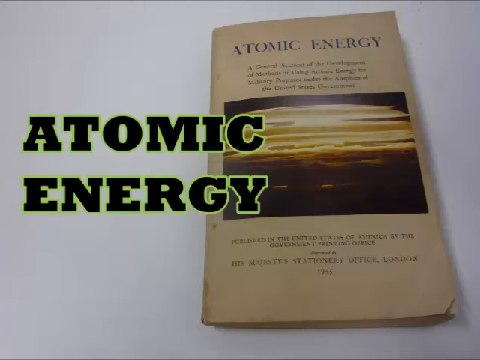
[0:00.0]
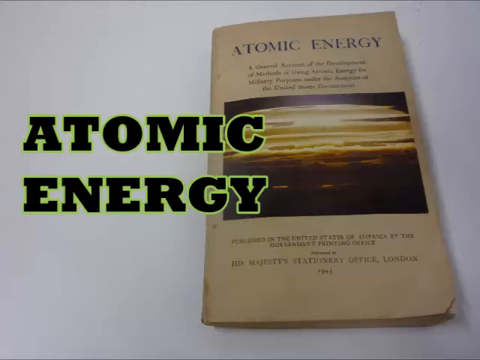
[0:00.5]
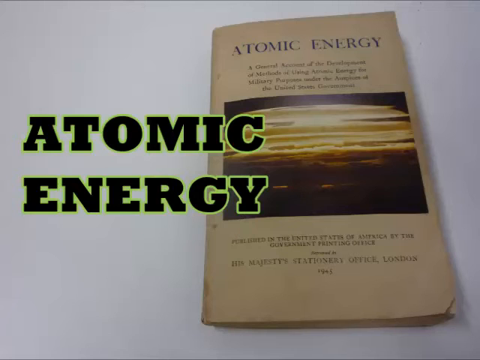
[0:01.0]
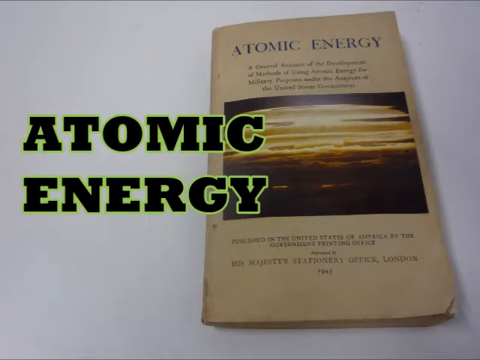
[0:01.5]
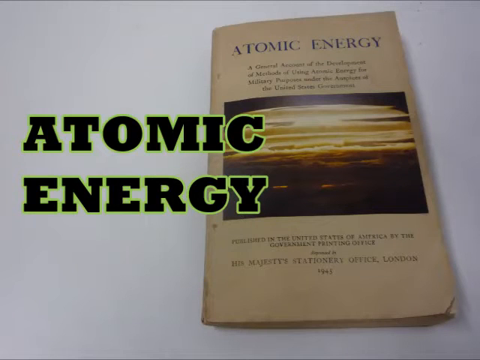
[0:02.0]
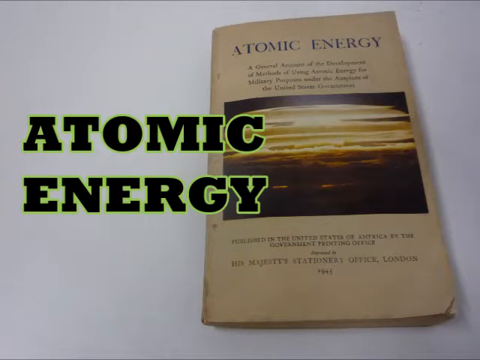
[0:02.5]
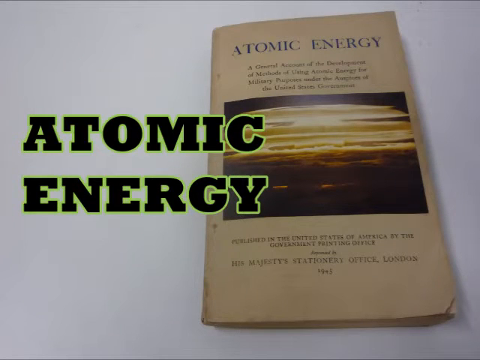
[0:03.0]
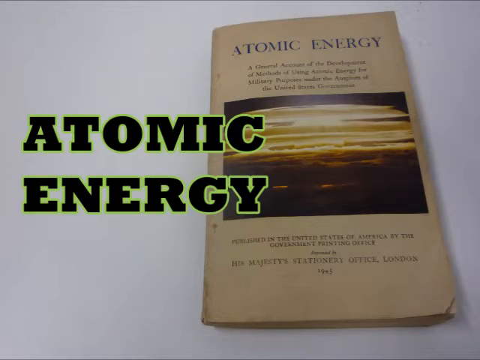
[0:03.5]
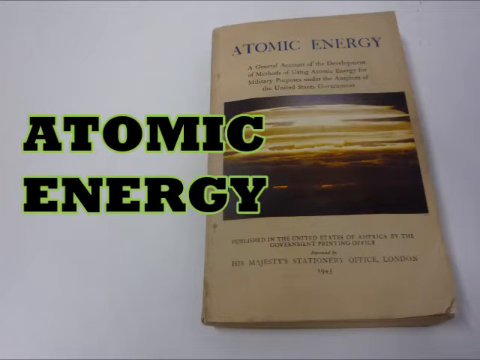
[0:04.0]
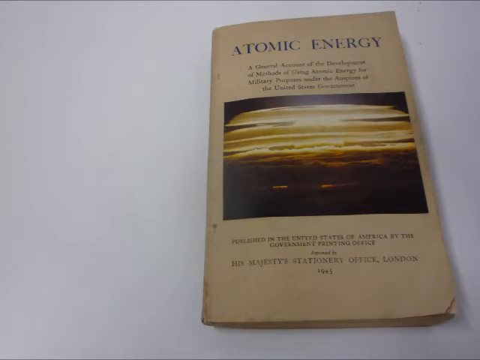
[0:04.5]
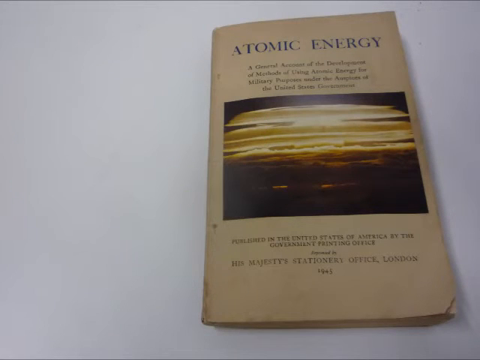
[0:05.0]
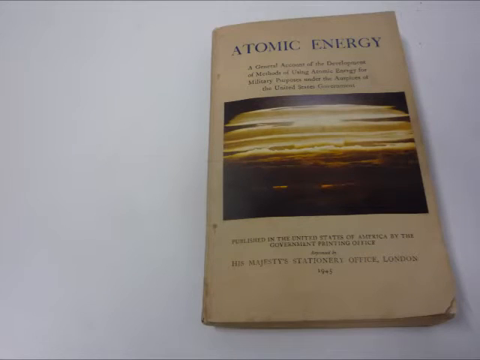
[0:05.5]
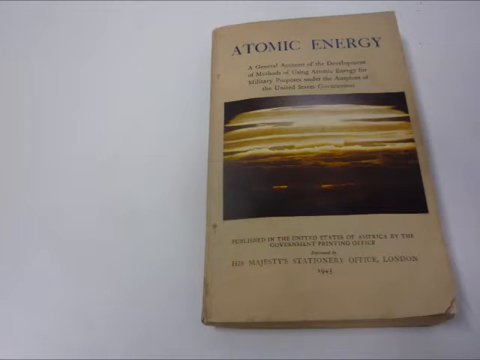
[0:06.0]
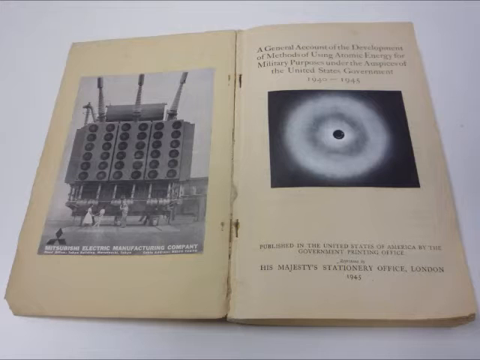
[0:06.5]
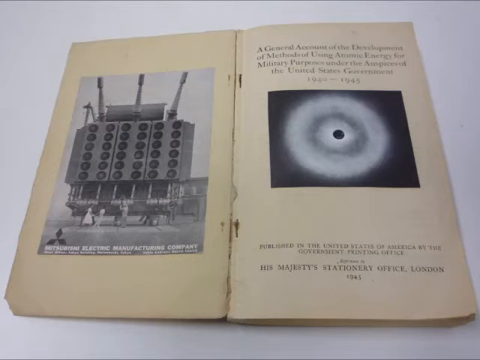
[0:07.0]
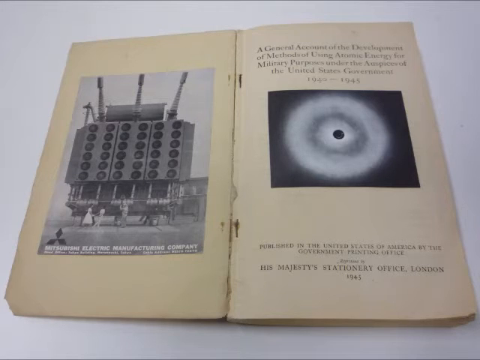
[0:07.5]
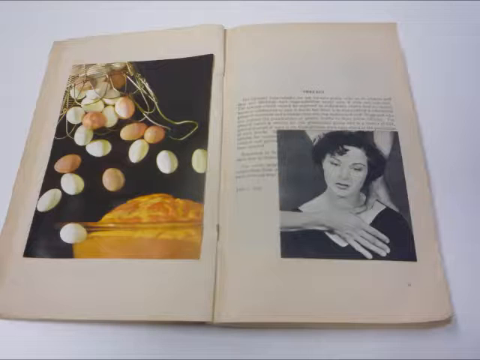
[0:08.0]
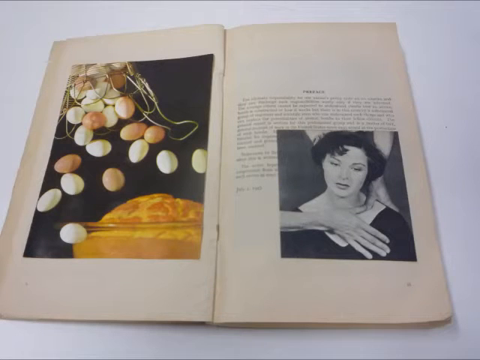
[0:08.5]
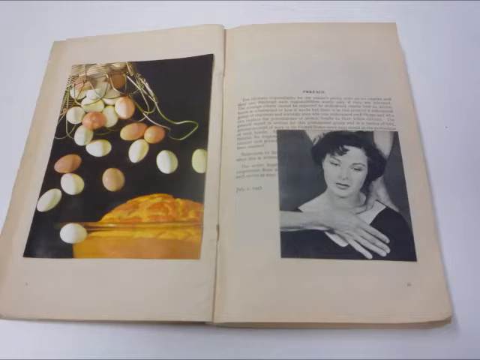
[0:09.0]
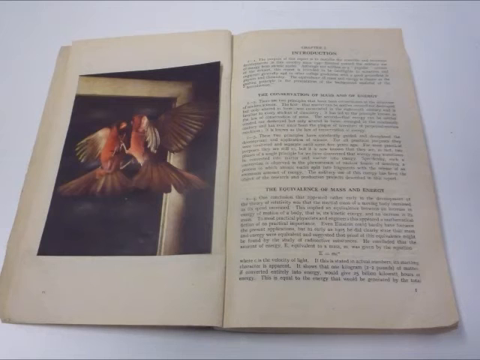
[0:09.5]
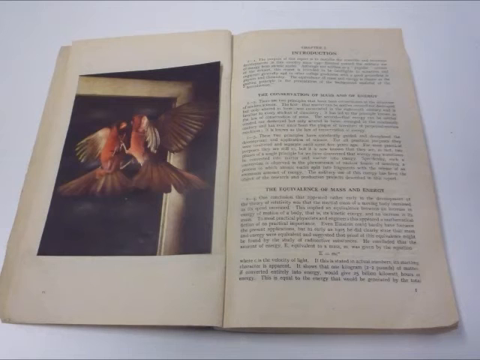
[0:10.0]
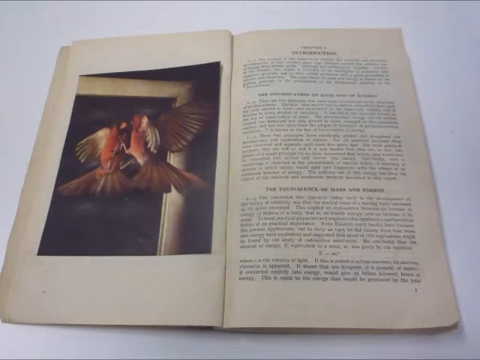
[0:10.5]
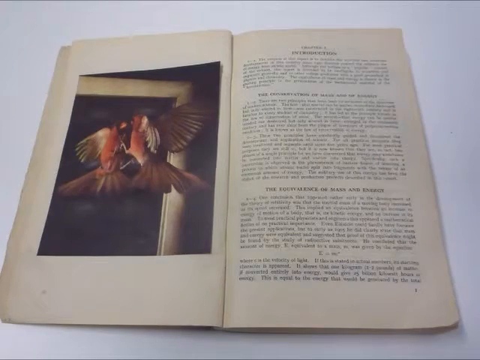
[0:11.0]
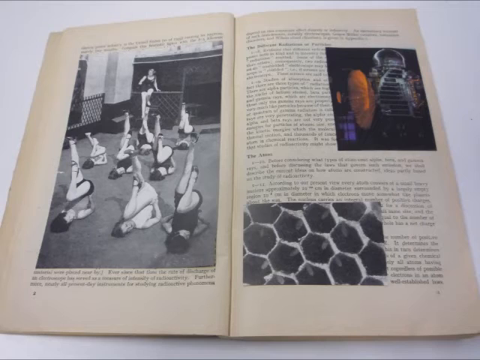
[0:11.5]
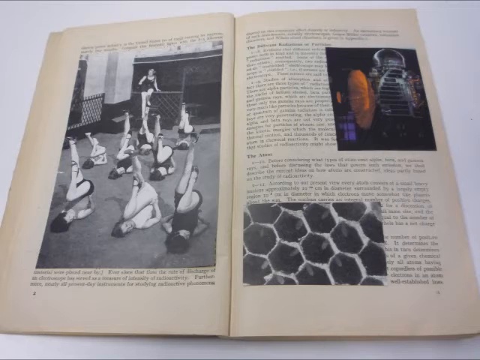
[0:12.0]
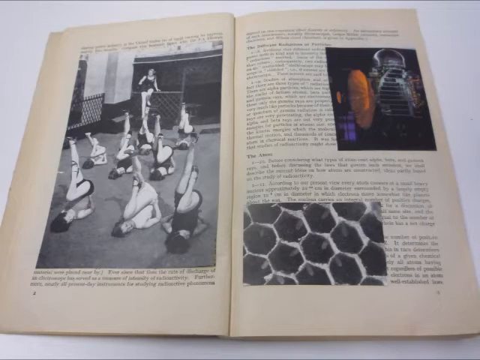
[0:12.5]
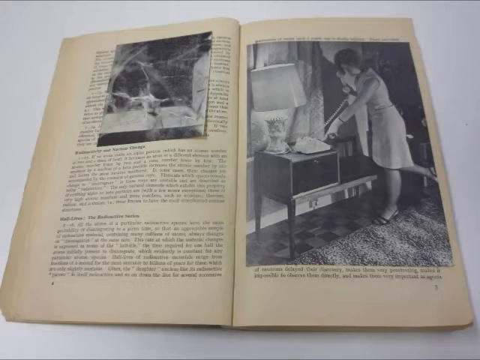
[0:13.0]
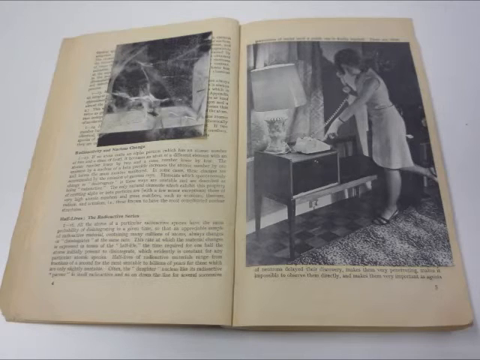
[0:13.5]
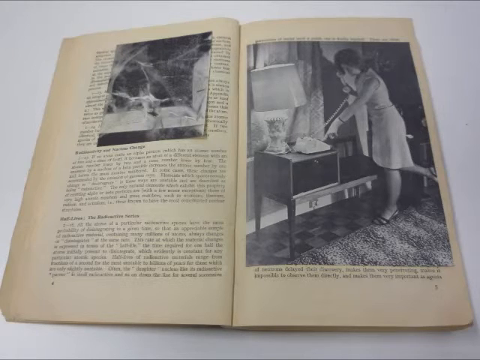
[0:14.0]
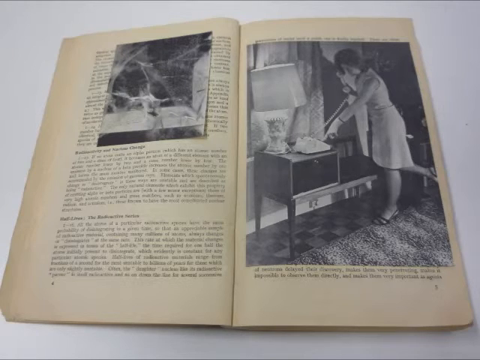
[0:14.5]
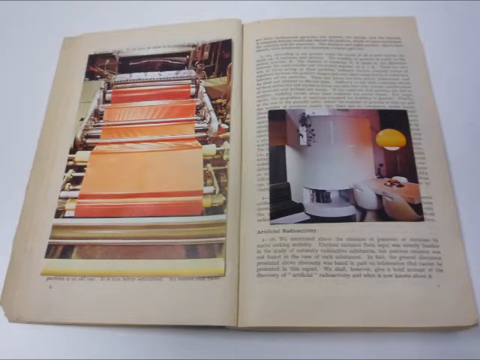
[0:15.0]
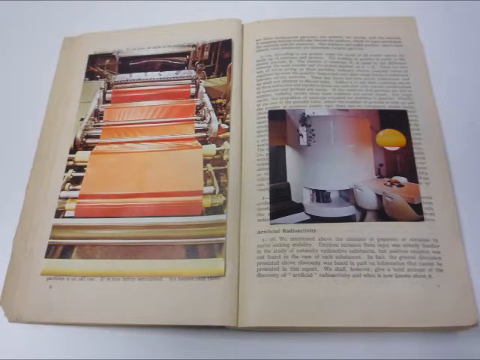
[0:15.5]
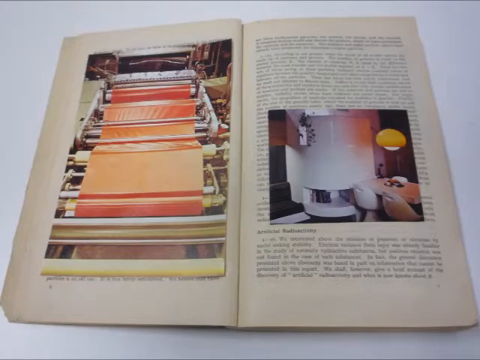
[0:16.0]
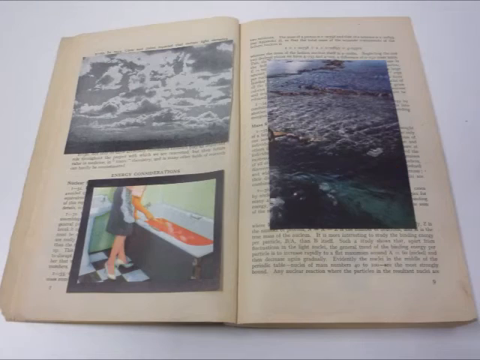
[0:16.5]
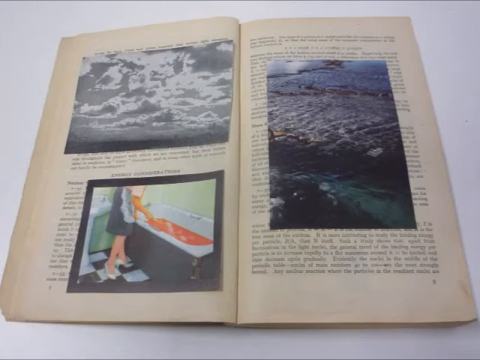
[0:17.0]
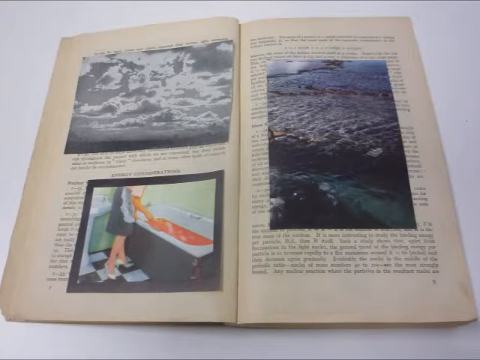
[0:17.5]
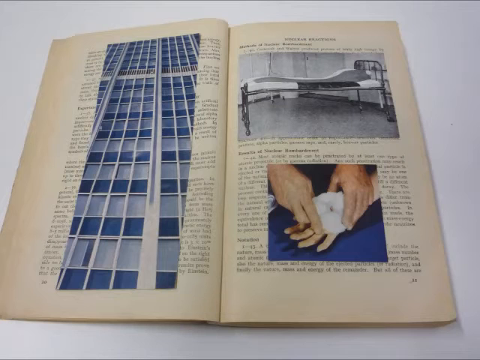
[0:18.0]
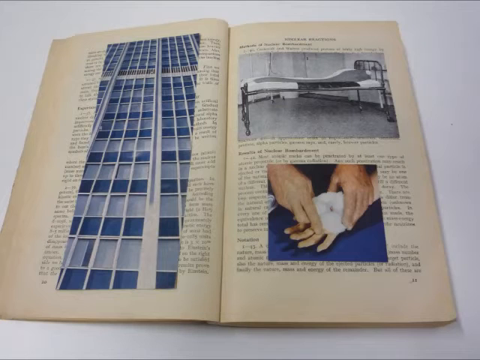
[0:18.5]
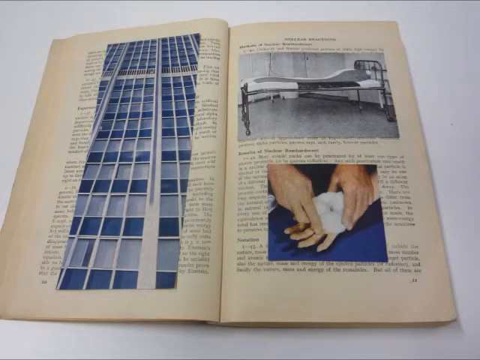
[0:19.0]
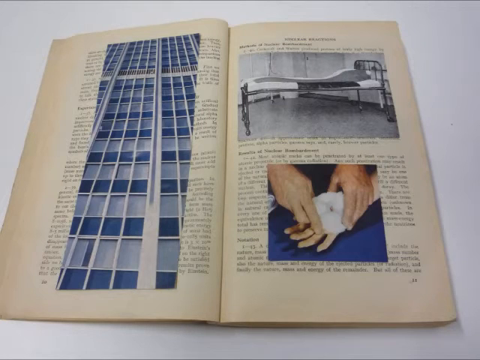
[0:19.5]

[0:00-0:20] The words "atomic energy" appear on screen, accompanied by what looks like a historical atomic energy leaflet or pamphlet. The front of the leaflet reads "a general account of the development of methods of using atomic energy for military purposes under the auspices of the United States government. Published in the United States of America by the Government Printing Office, reprinted in His Majesty's Stationary Office, London, 1945." The leaflet itself looks like it is from 1945; its pages are yellowed and crumbling at the corners. When it is opened, the binding is beginning to come away. Inside there seems to be a lot of information about atomic energy, with one heading reading "the foundation of mass and energy". There are also quite a few seemingly unrelated pictures: women doing exercises, a bird in a mirror, and what looks like a classic 1940s or 1950s housewife answering the phone in a nice day dress, suggesting the content is possibly wider than just atomic energy. More pages continue to be shown.